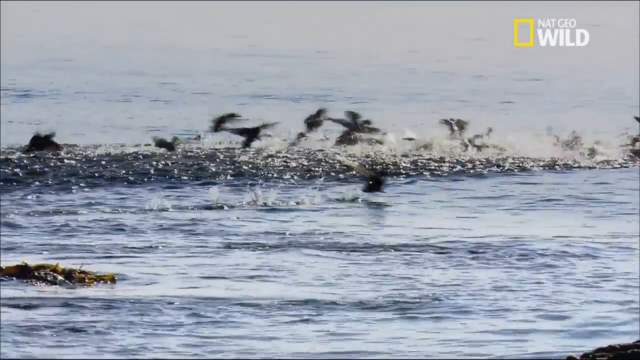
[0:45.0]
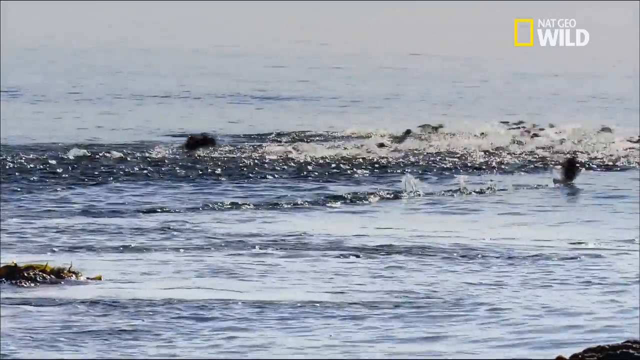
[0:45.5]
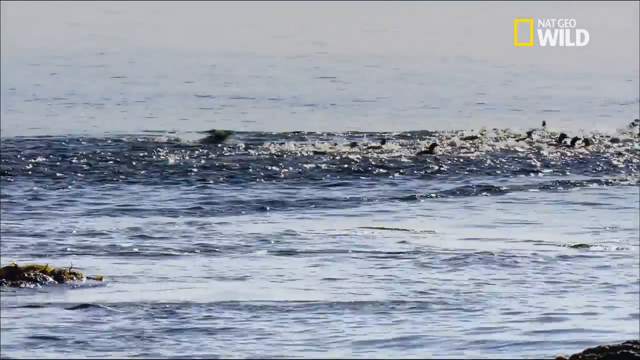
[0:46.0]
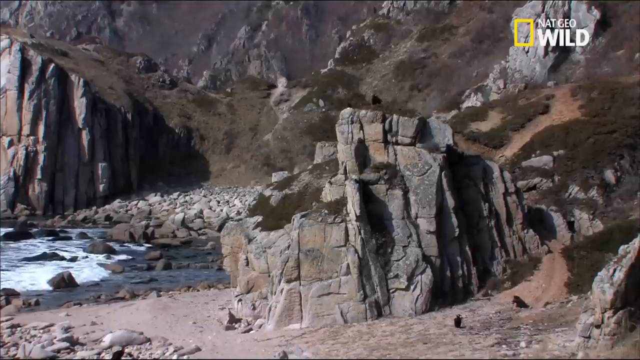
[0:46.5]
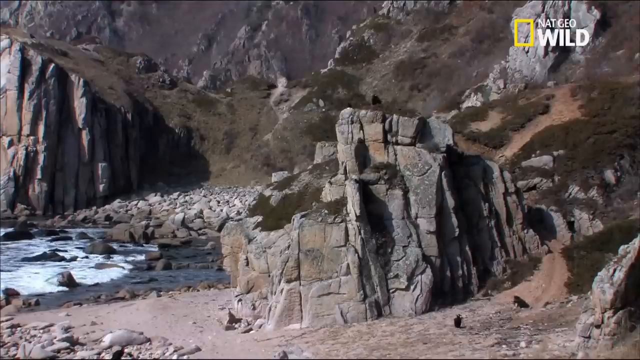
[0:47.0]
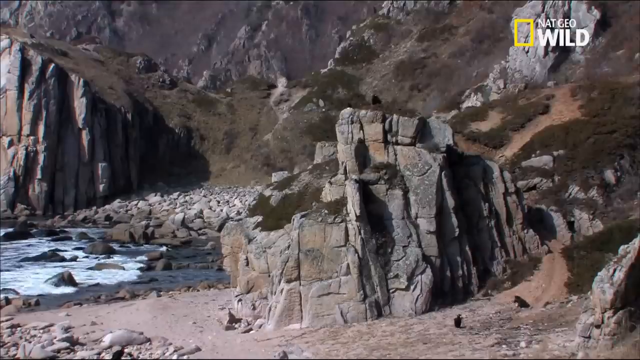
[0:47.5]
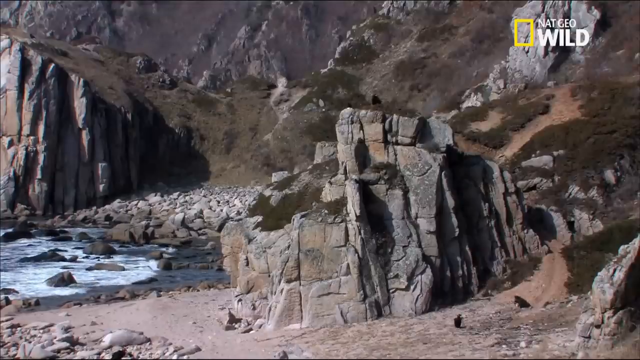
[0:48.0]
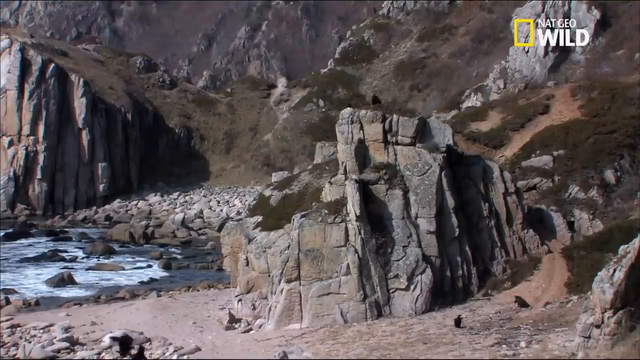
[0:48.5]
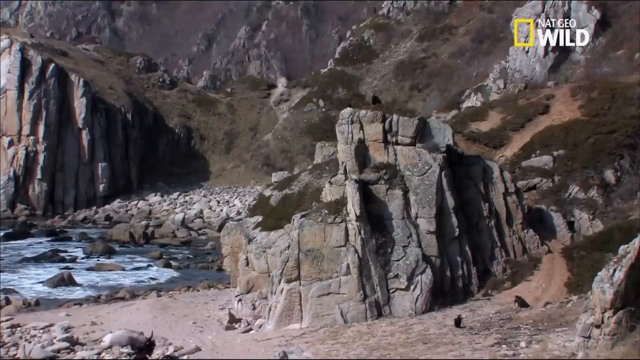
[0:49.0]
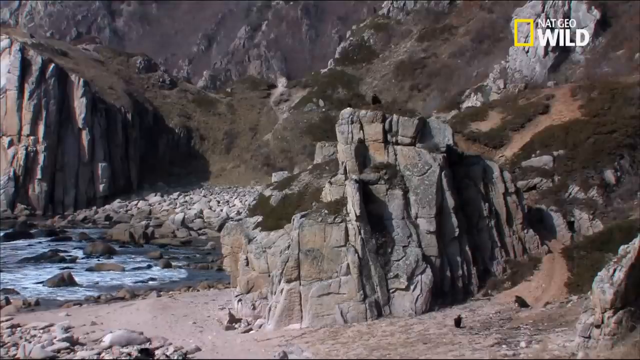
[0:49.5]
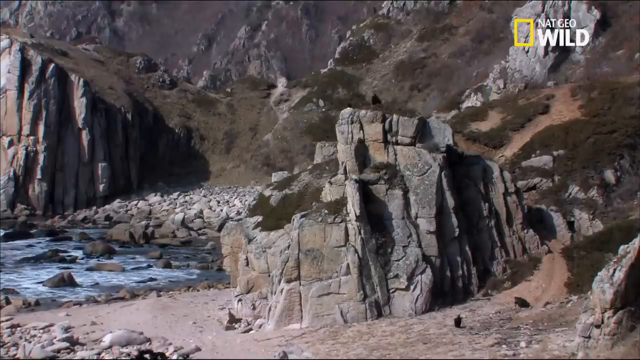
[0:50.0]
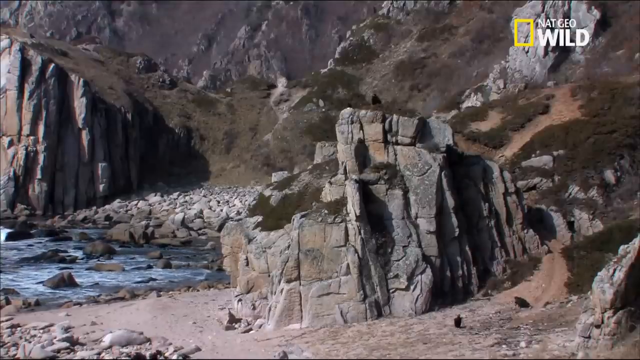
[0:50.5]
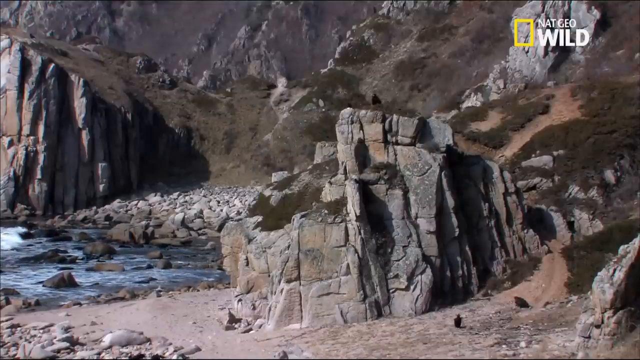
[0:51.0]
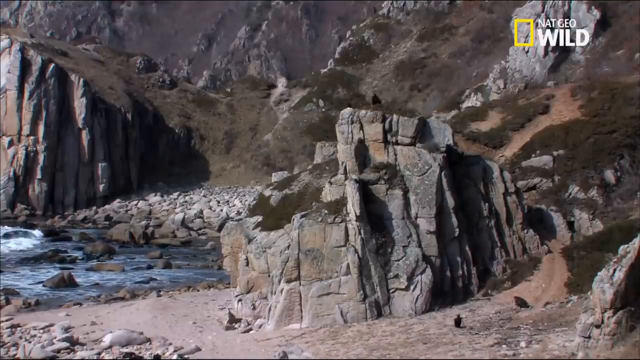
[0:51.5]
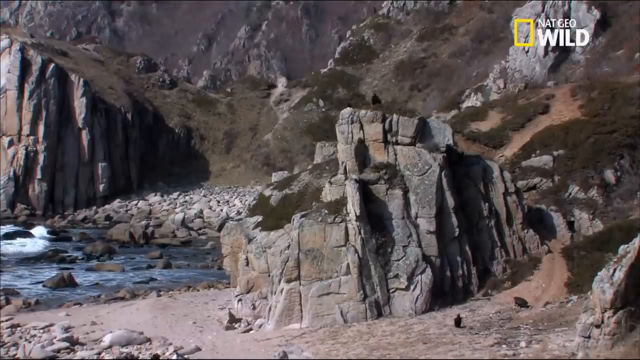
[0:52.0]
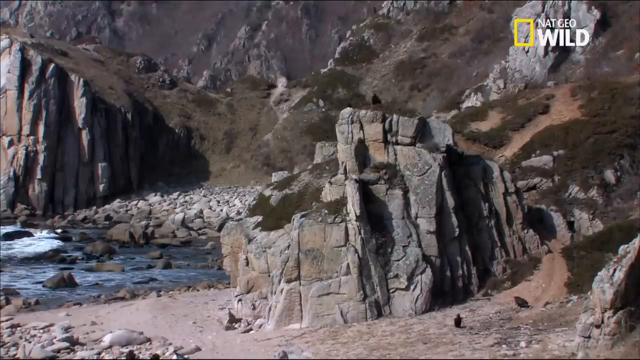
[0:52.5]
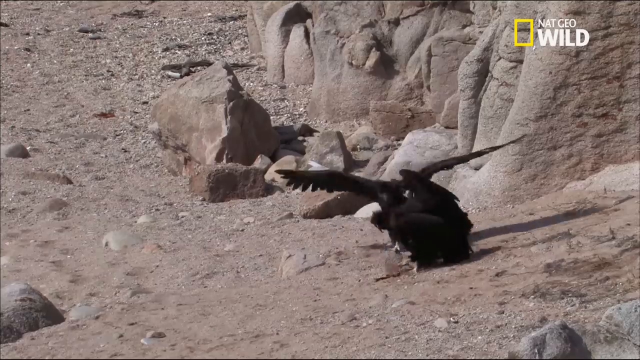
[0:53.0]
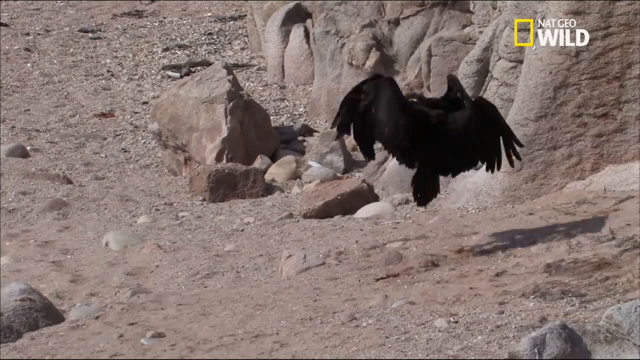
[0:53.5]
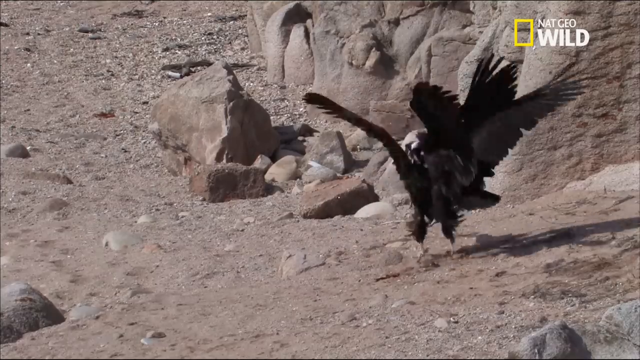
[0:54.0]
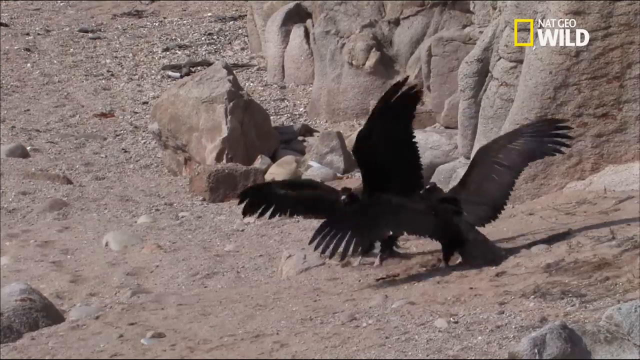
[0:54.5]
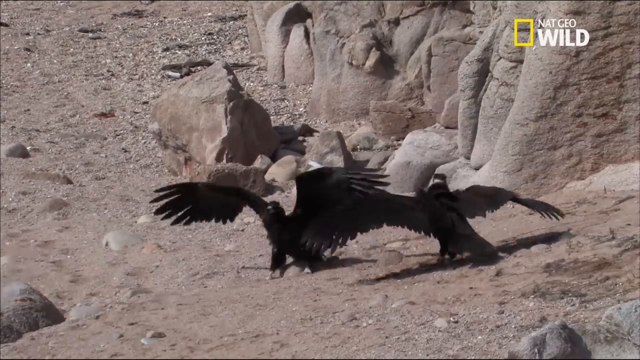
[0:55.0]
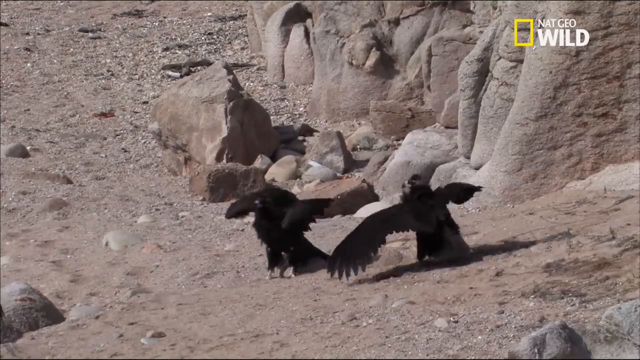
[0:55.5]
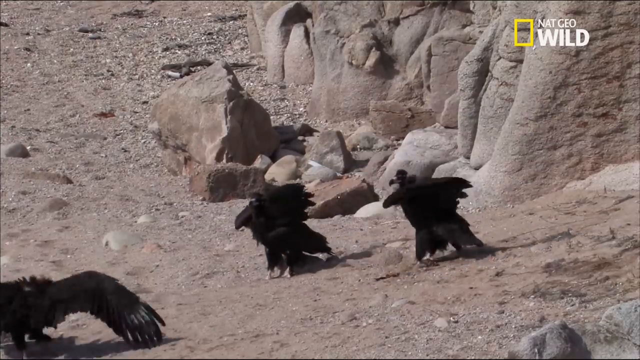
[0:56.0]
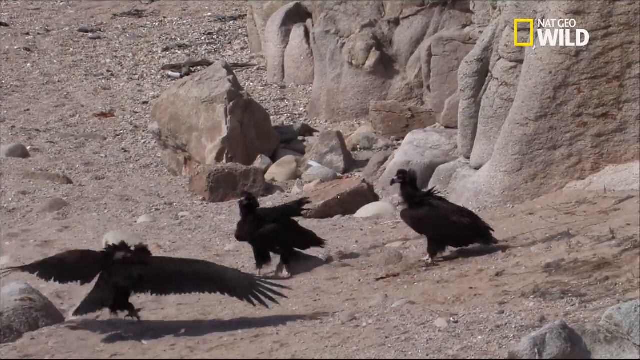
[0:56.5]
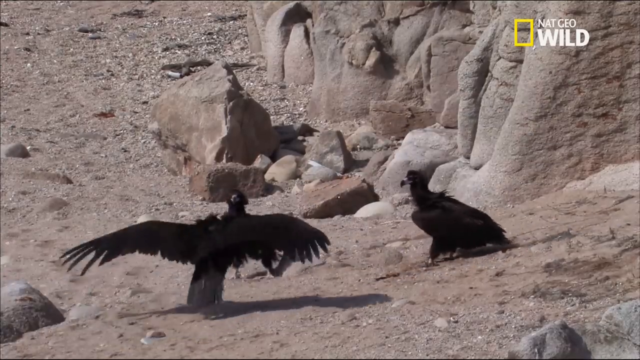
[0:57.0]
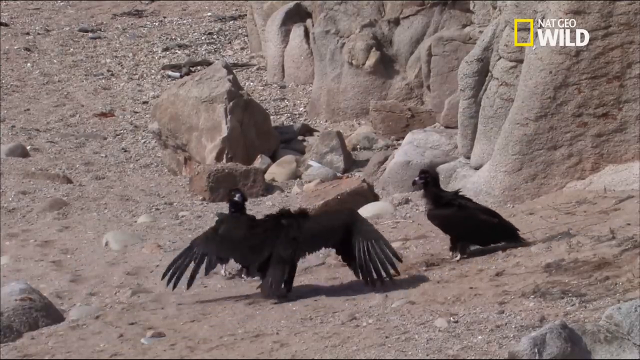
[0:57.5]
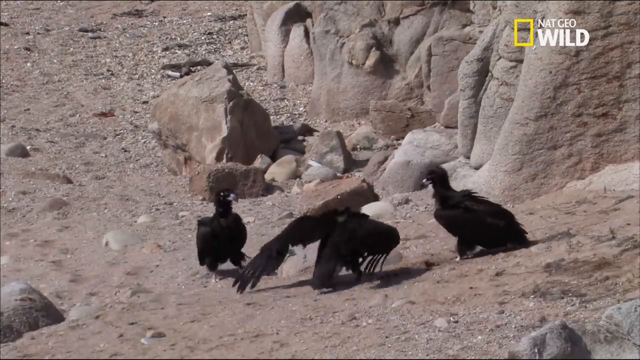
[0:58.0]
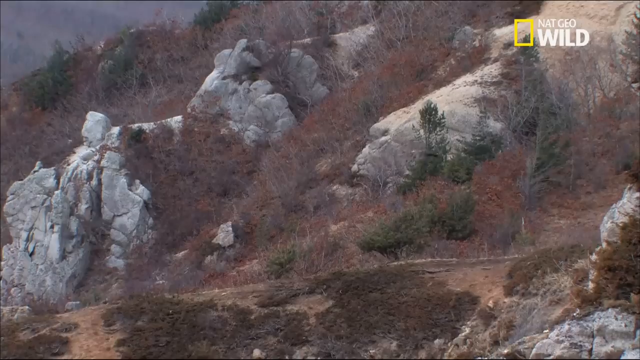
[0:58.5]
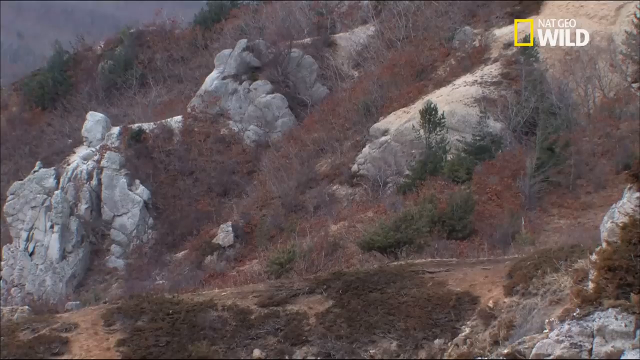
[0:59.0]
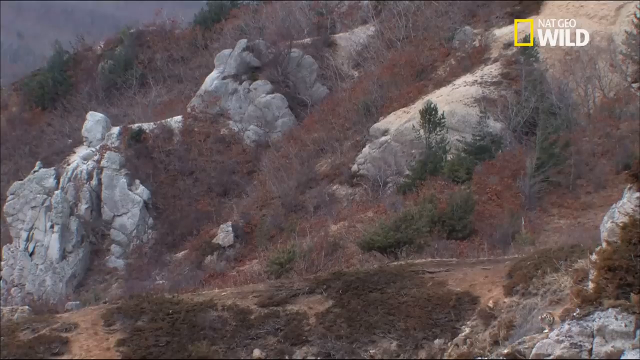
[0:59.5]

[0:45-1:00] The birds continue flying to the right across the water, their wing flaps making small waves that throw water droplets into the air, which fall back onto the ocean. The camera moves on to another side of the cliff, which is high and overhanging the water, with some water still washing up on the shore beneath it. Next, three much bigger, all-black birds are shown huddled together, seemingly searching for food. Two of them hit each other, maybe fighting or doing some kind of mating dance; two birds fly into each other, and a third bird walks up on the left. They all seem to walk away from each other. The camera then zooms out, showing another couple of birds flying off in the distance.